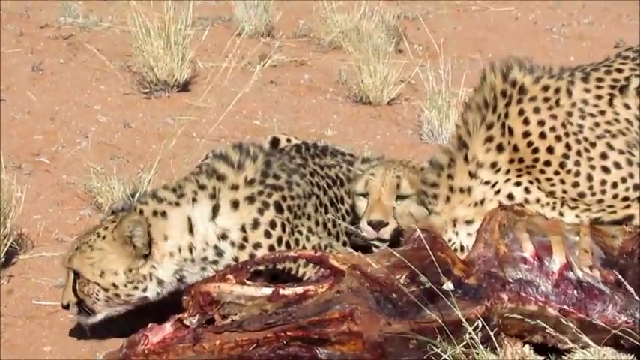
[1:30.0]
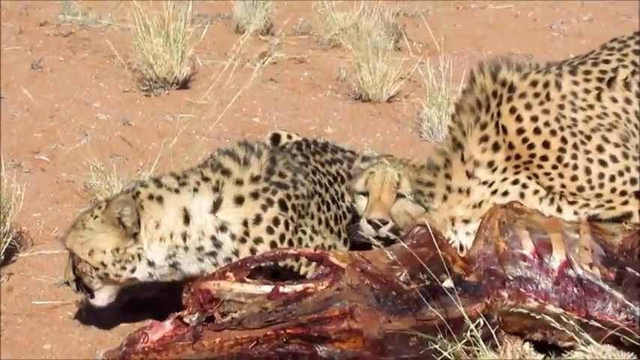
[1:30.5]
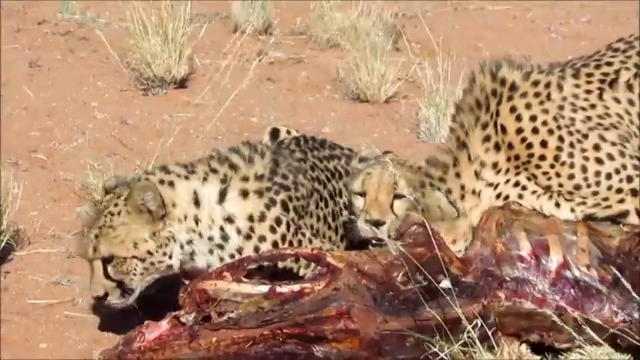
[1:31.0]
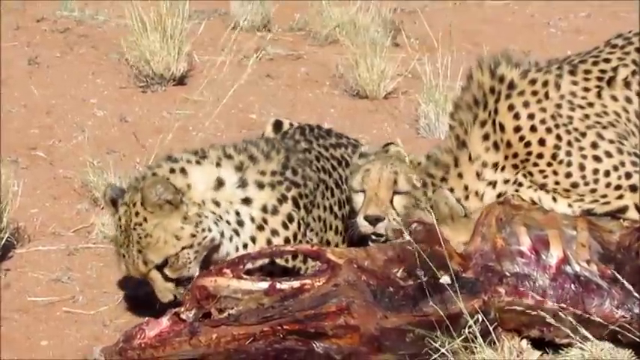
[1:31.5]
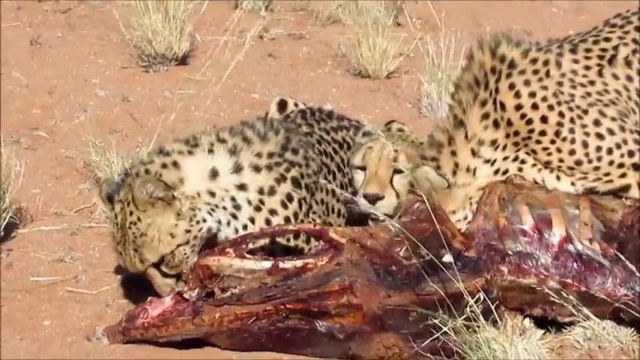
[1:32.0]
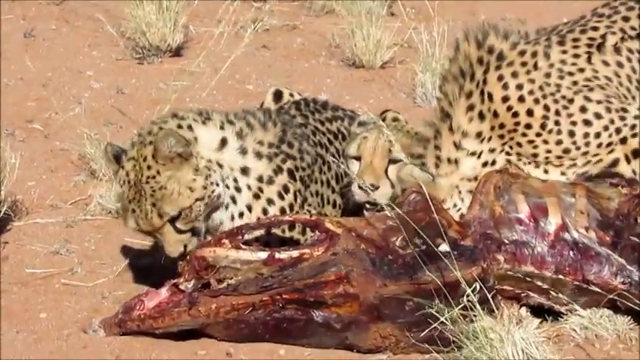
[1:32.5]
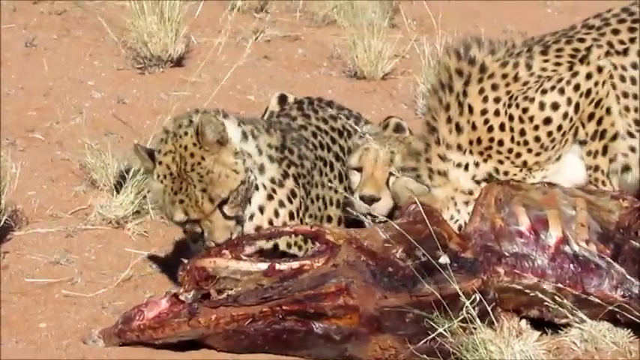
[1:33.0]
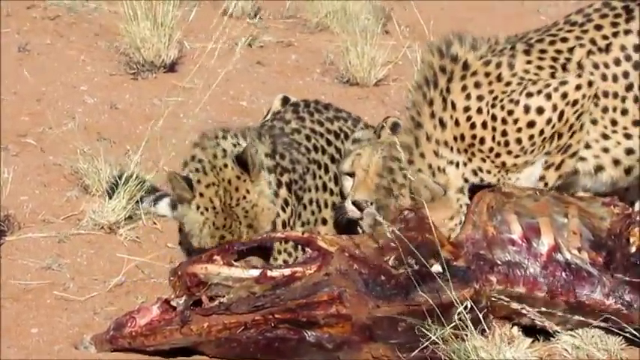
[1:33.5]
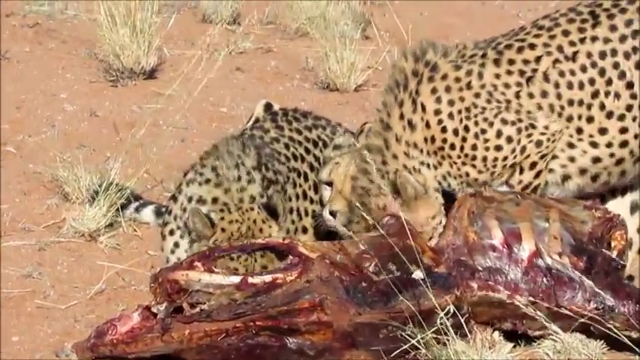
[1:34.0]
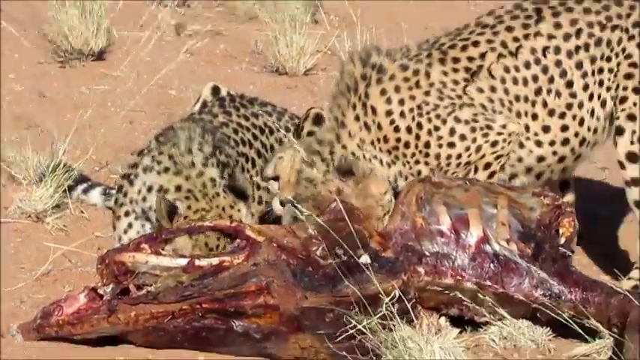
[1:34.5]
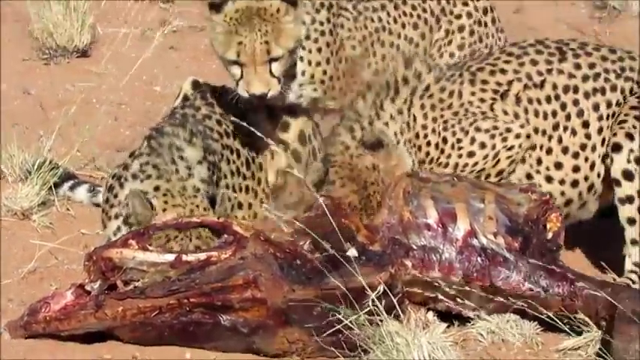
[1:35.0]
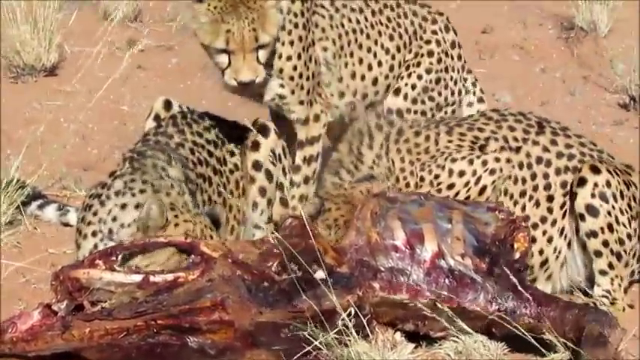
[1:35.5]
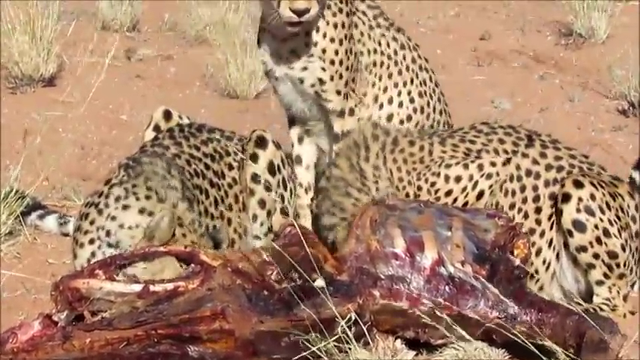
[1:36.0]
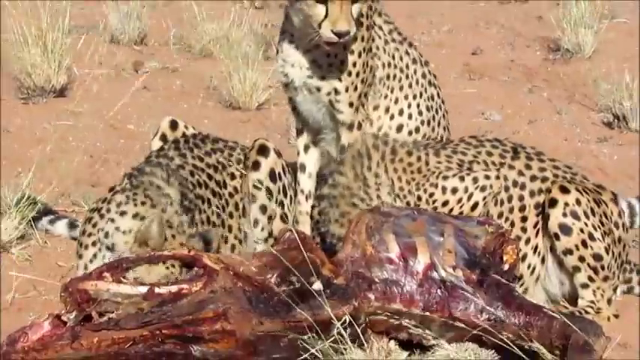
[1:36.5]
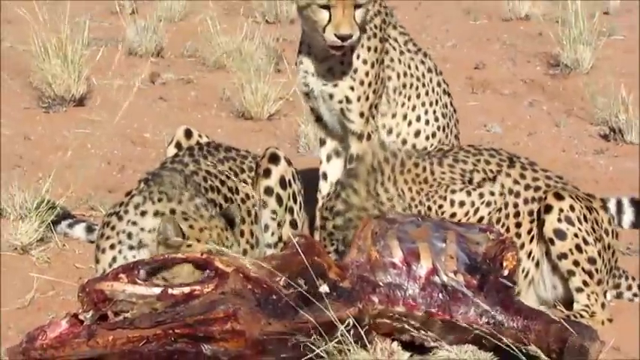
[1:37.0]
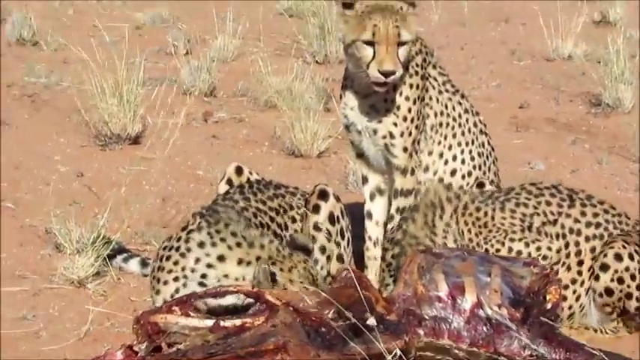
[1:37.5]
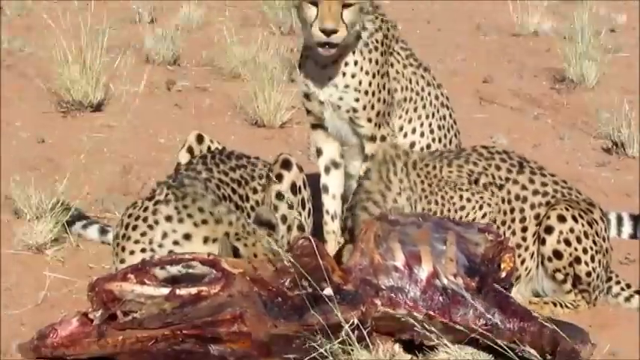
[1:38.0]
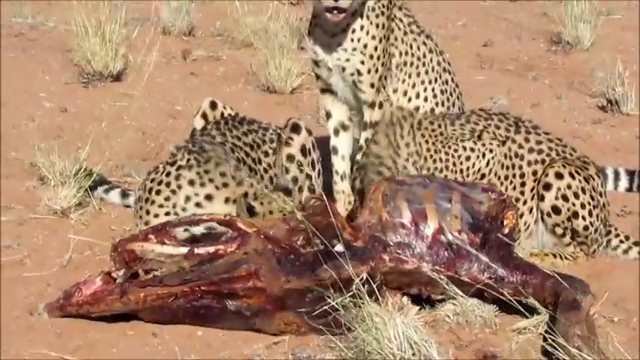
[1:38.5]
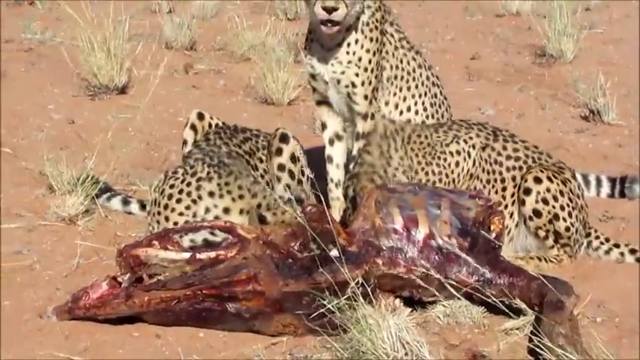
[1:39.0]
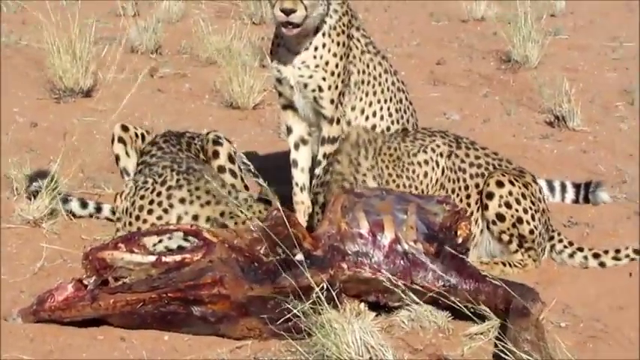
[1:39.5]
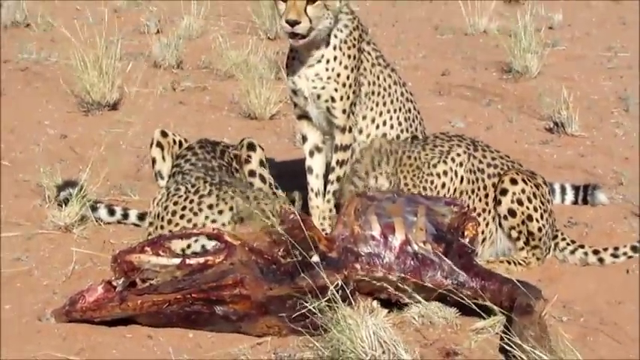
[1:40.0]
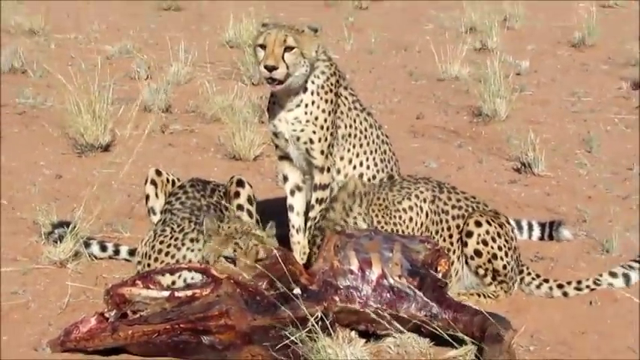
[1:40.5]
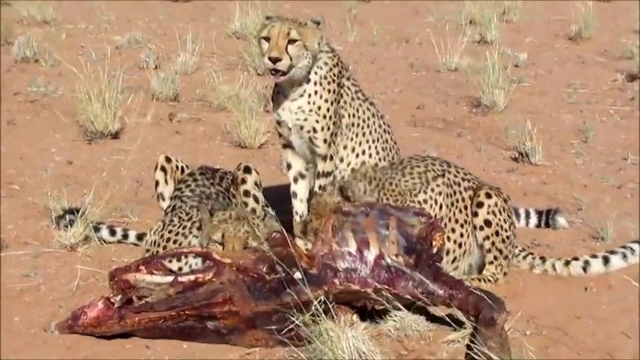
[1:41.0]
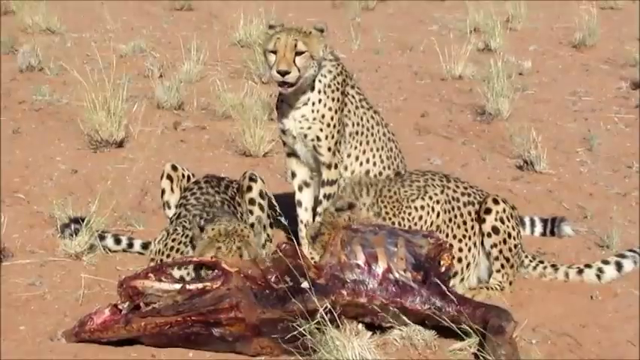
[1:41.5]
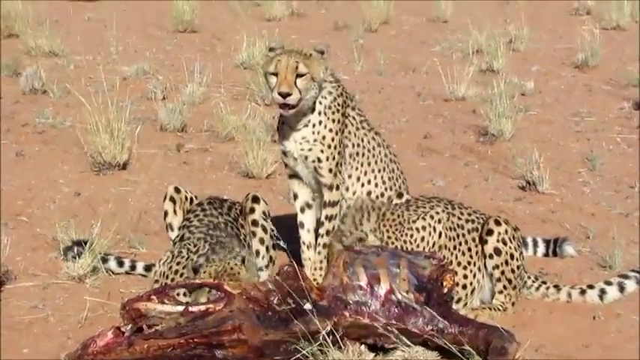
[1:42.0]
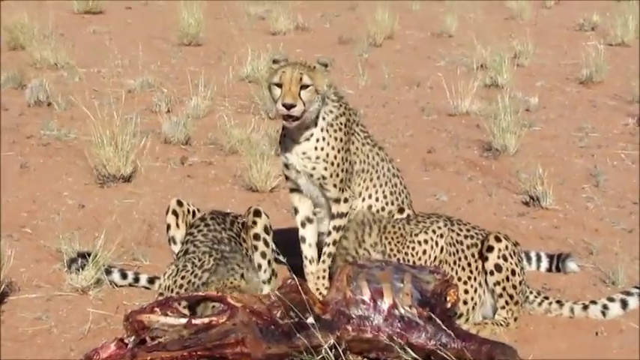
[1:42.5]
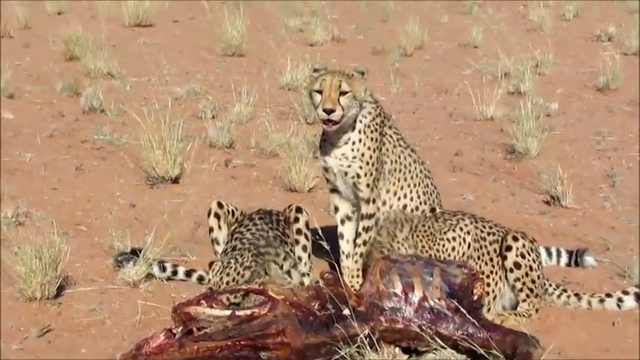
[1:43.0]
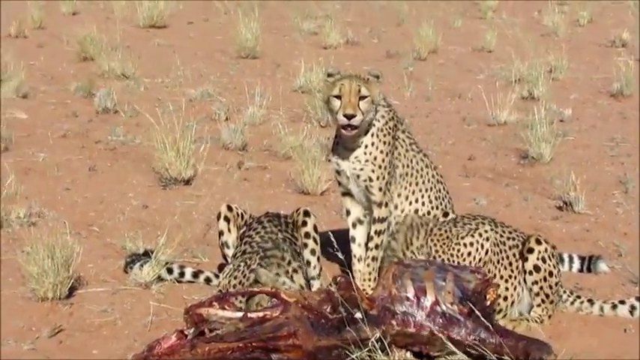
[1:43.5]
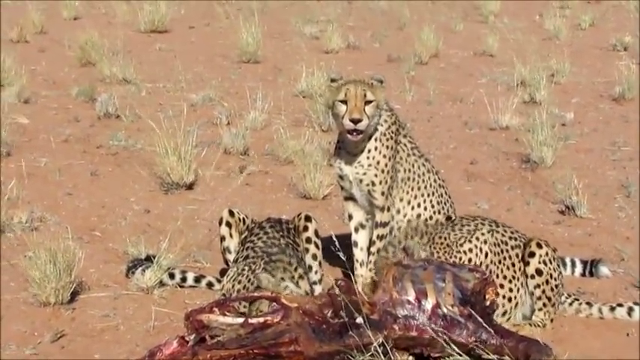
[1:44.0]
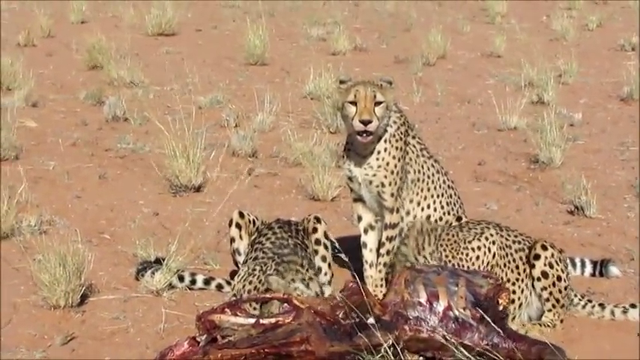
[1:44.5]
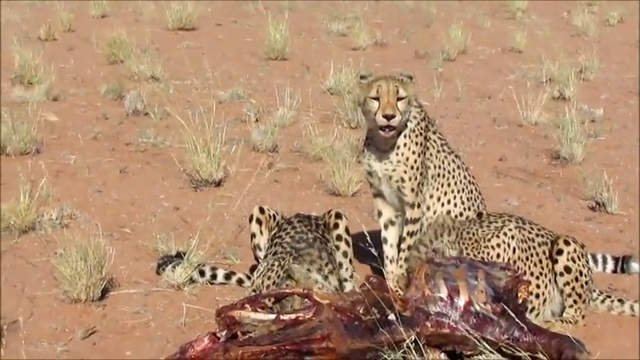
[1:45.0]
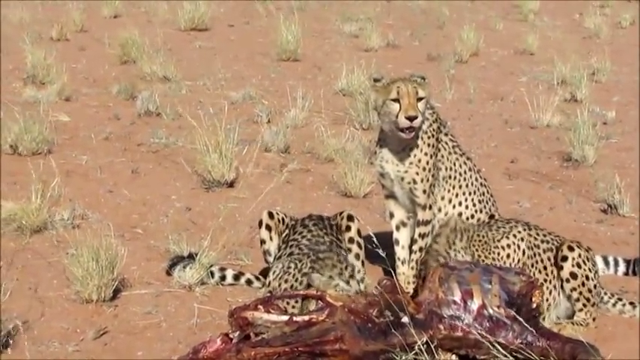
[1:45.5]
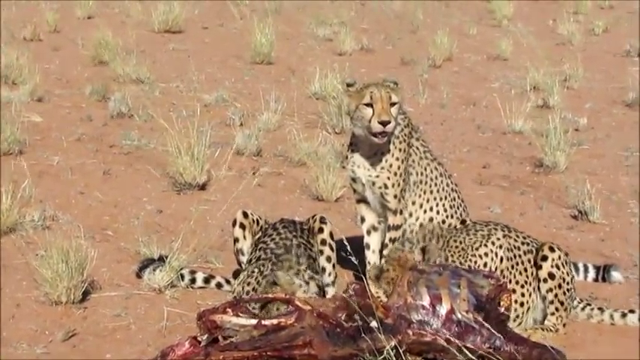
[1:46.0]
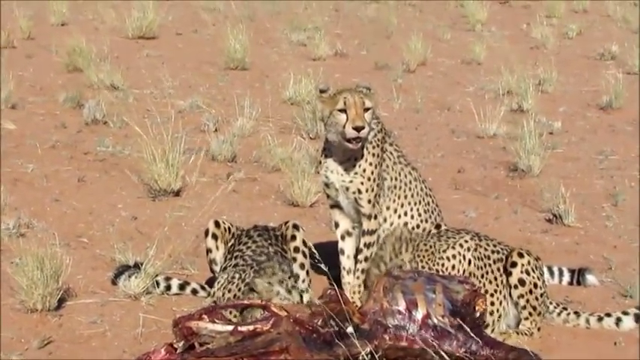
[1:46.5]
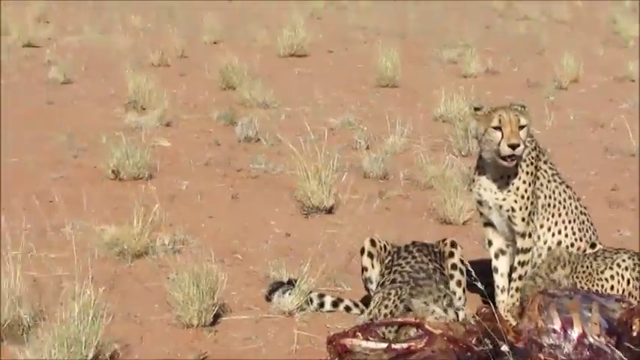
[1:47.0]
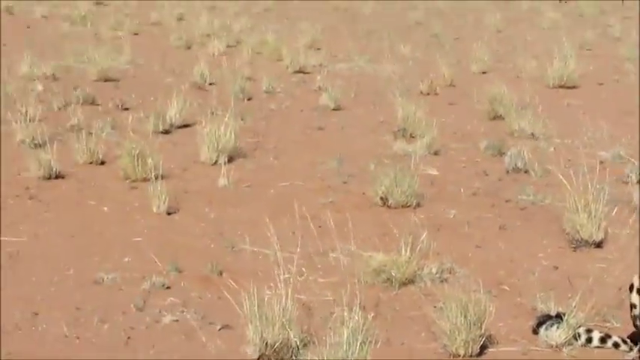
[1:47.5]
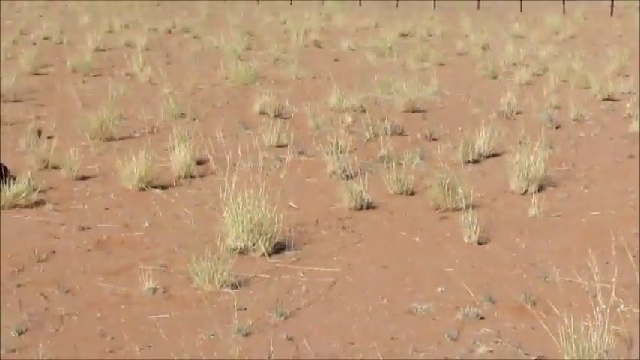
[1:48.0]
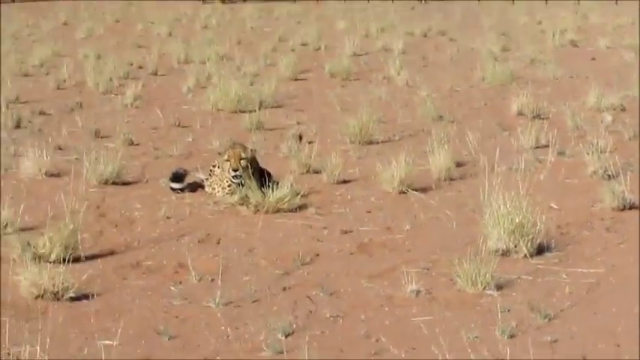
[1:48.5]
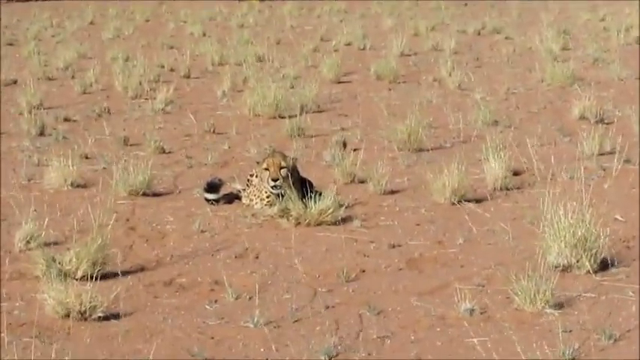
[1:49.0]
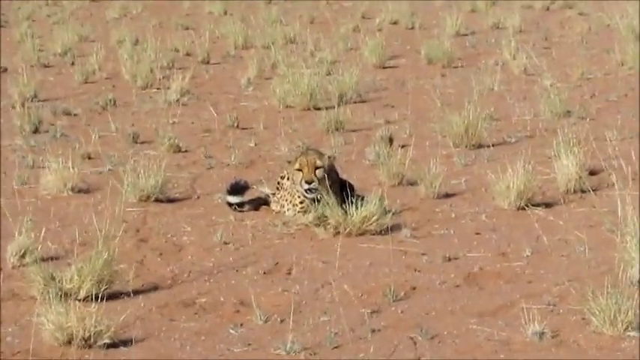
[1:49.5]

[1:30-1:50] Three cheetahs are seen in close-up. The cheetahs on the left and right eat the emaciated animal in front of them, tearing flesh off the bones, while the cheetah in the middle is kind of sitting there looking relaxed and watching the other two fairly casually. The middle cheetah suddenly stands up and sits above the other two, which dive fairly aggressively into the carcass. The cheetah sitting up looks at the camera and seems to be kind of watching its surroundings as the other two get very focused on eating. The camera pans to the left to show the cheetah sitting by itself, still sitting down and watching the situation unfold, and then pans to the right.